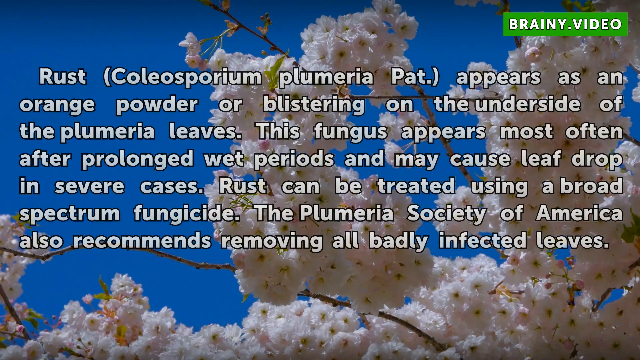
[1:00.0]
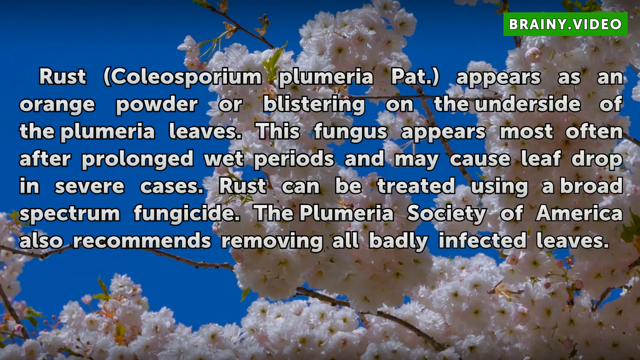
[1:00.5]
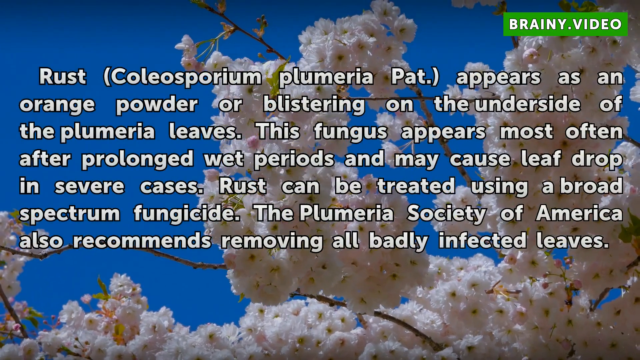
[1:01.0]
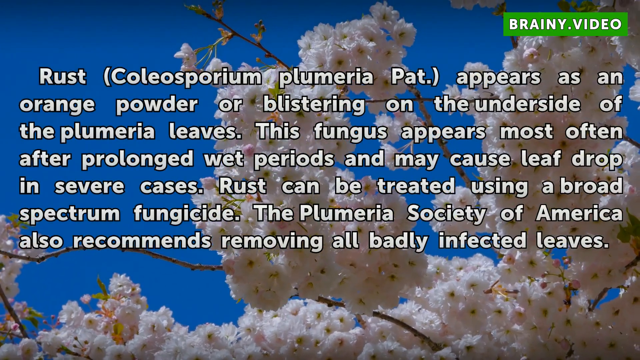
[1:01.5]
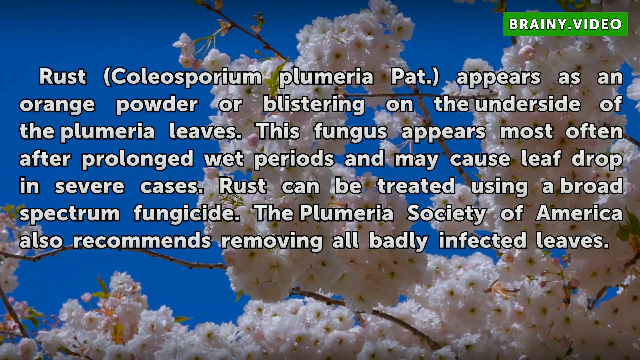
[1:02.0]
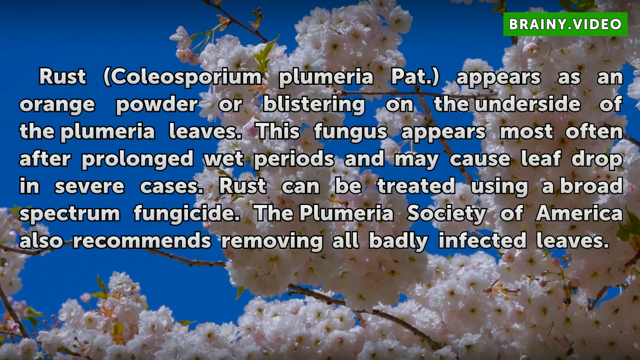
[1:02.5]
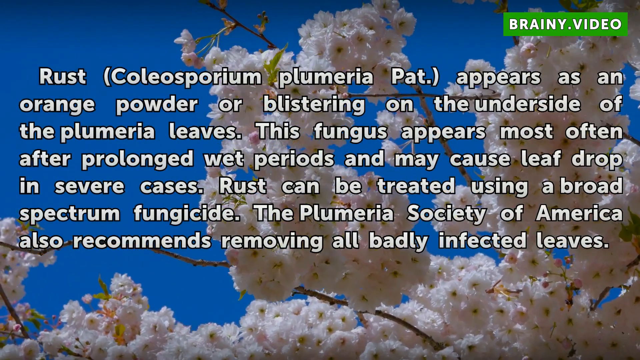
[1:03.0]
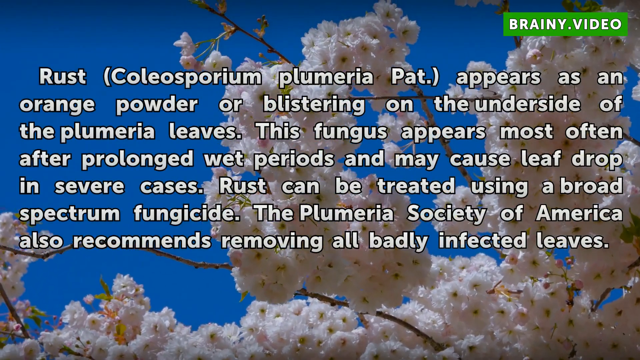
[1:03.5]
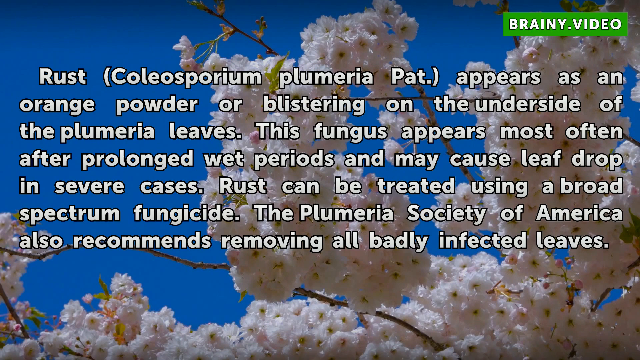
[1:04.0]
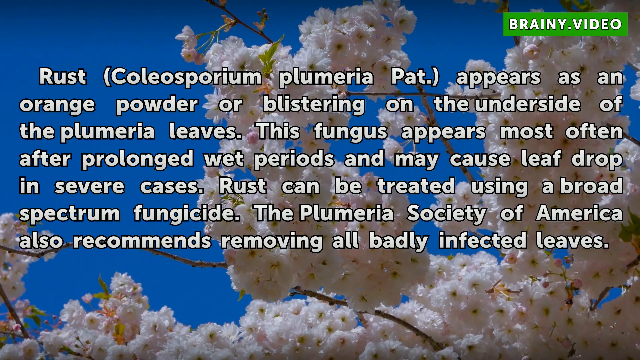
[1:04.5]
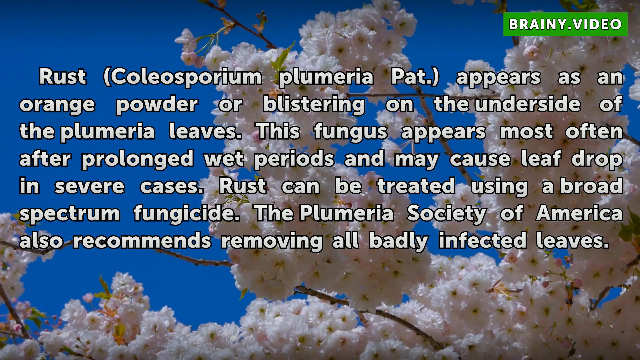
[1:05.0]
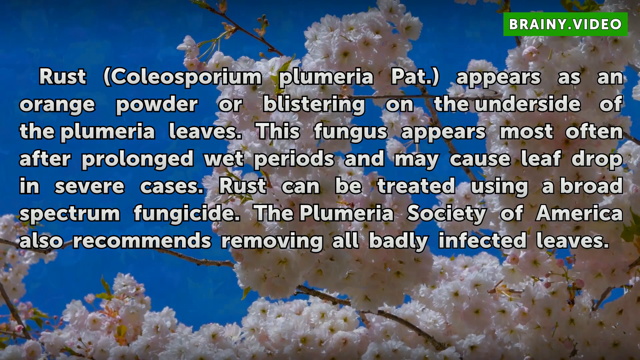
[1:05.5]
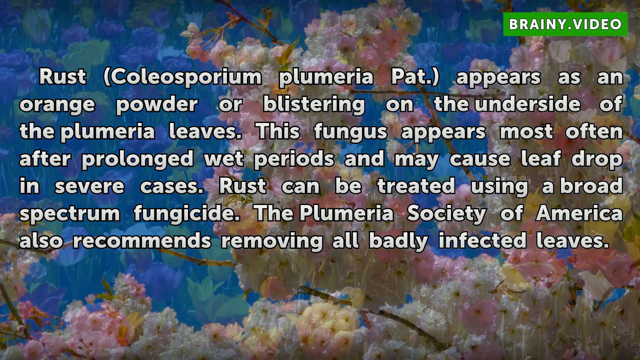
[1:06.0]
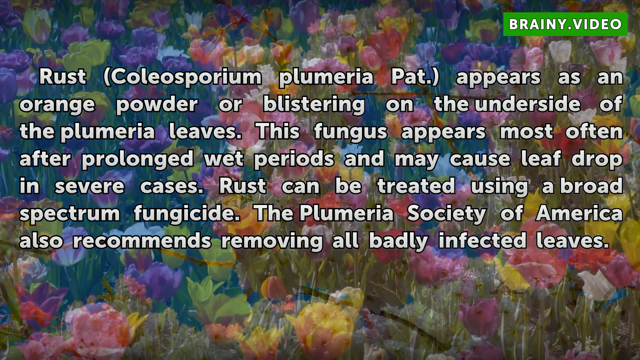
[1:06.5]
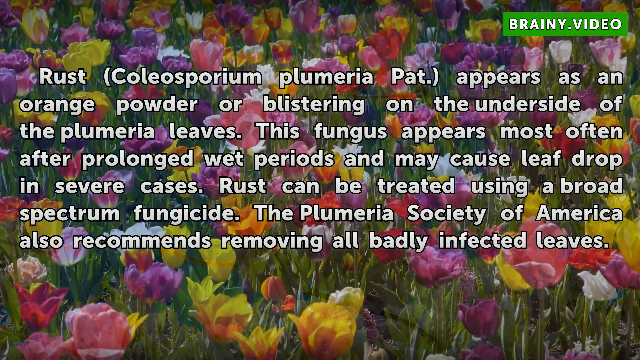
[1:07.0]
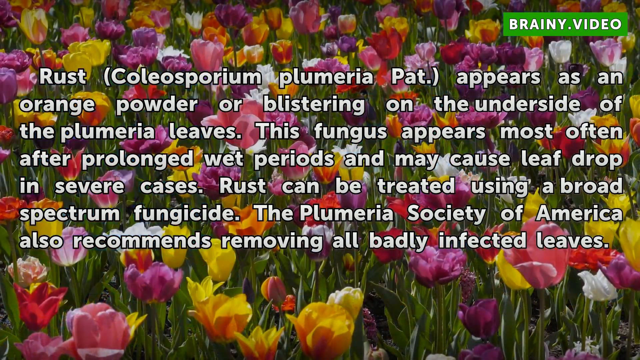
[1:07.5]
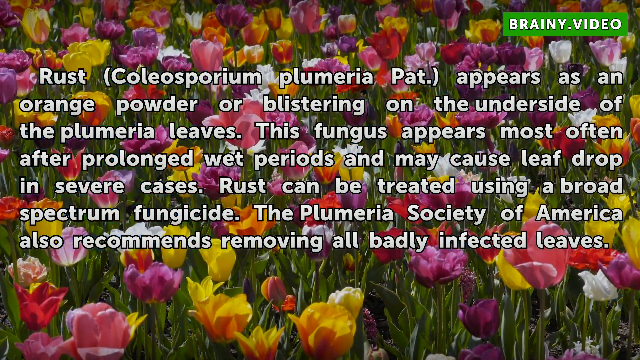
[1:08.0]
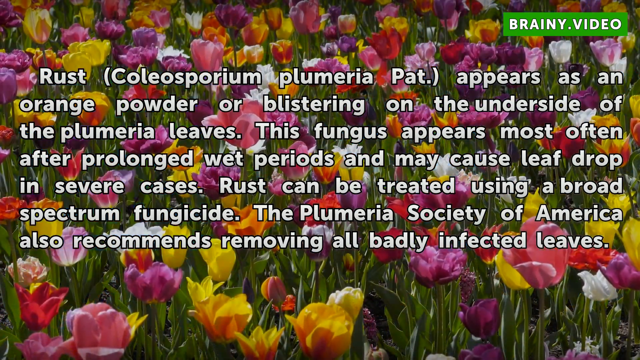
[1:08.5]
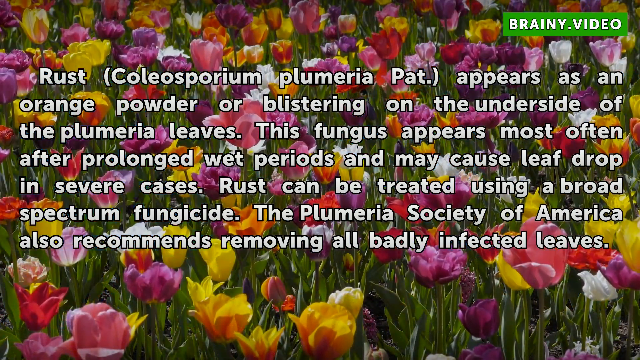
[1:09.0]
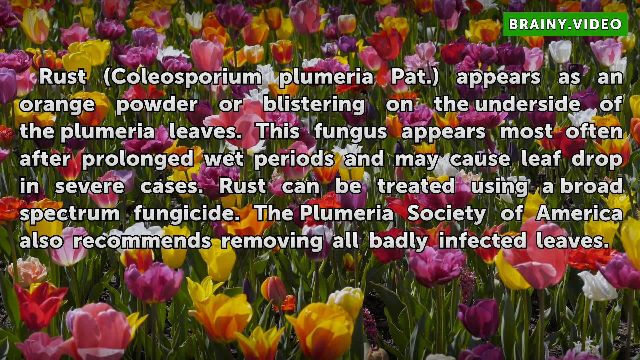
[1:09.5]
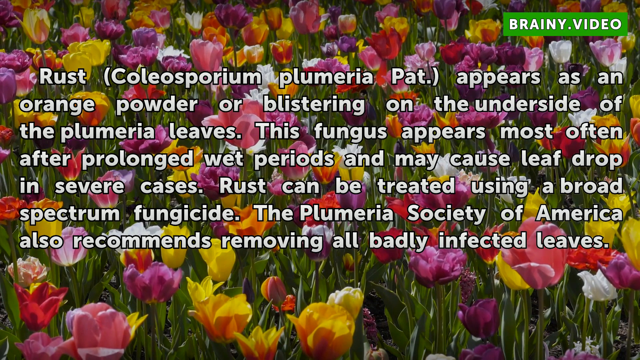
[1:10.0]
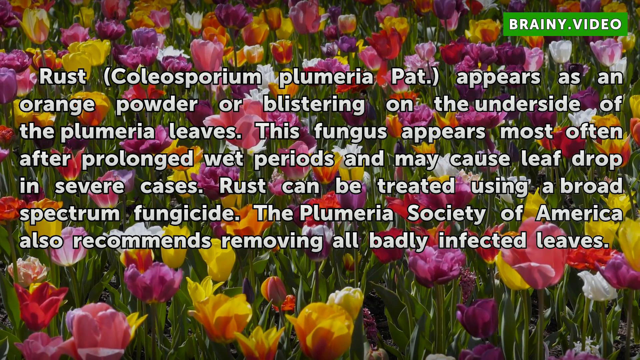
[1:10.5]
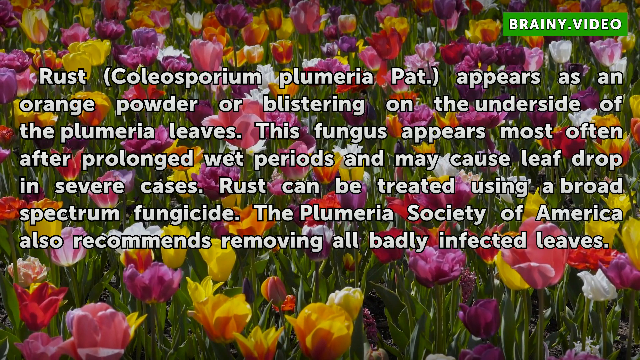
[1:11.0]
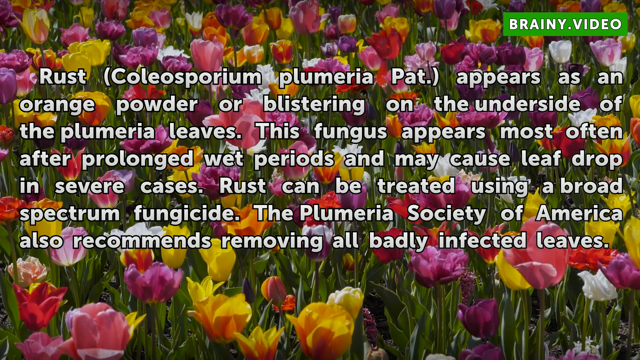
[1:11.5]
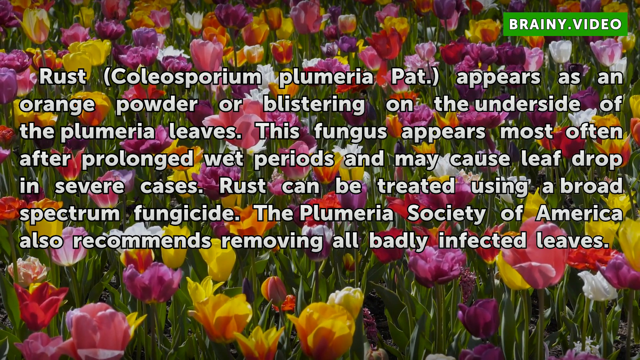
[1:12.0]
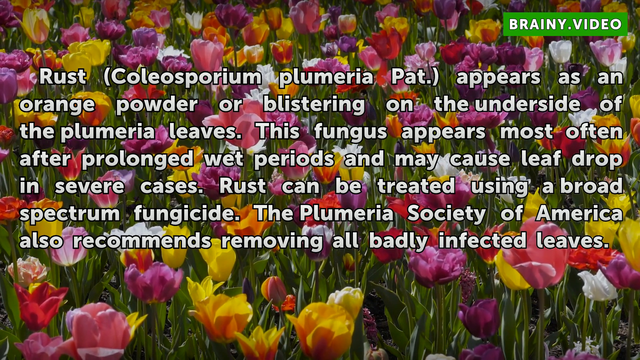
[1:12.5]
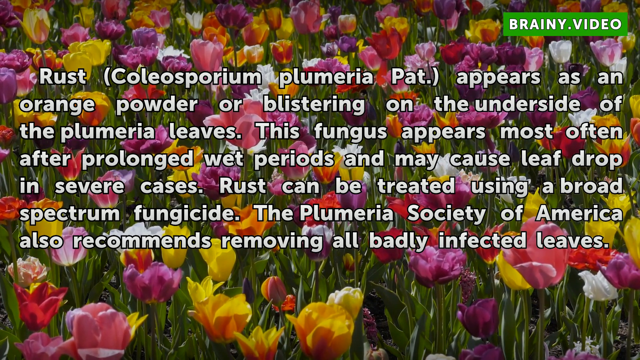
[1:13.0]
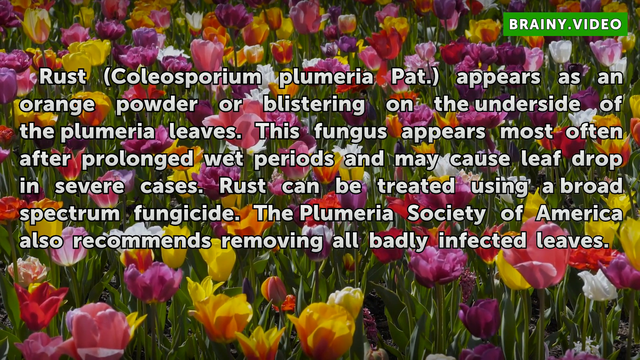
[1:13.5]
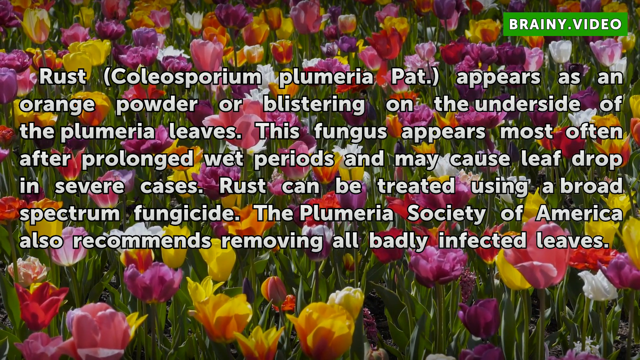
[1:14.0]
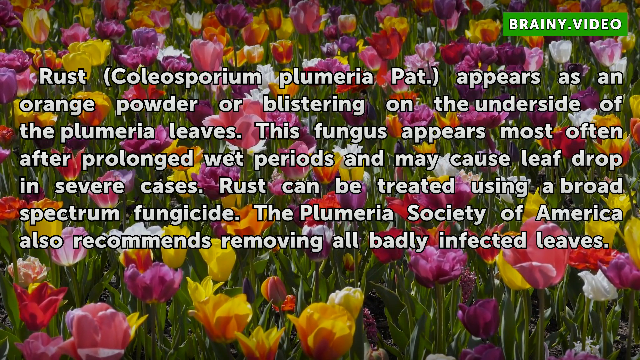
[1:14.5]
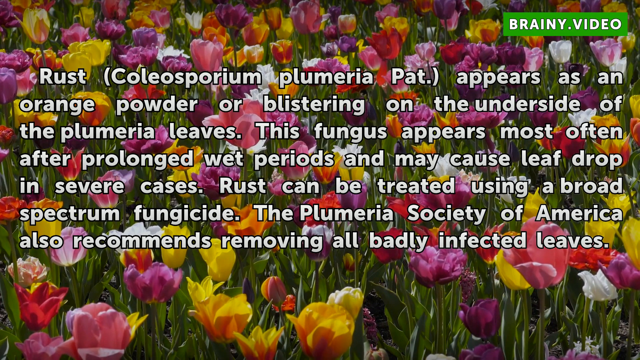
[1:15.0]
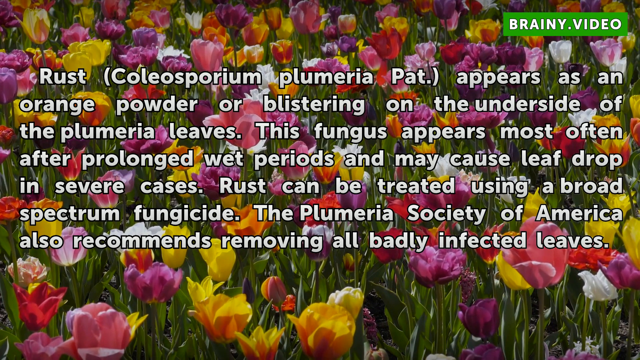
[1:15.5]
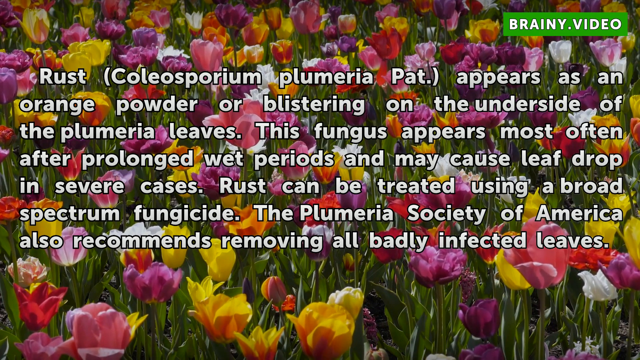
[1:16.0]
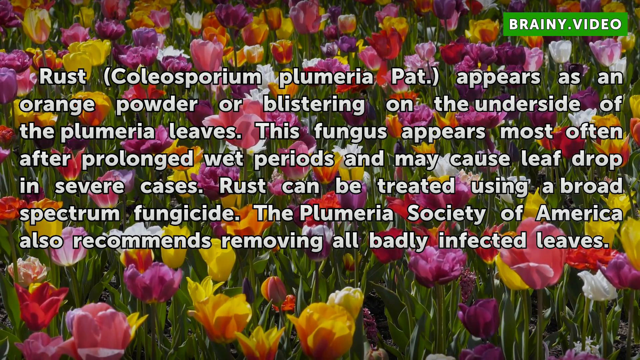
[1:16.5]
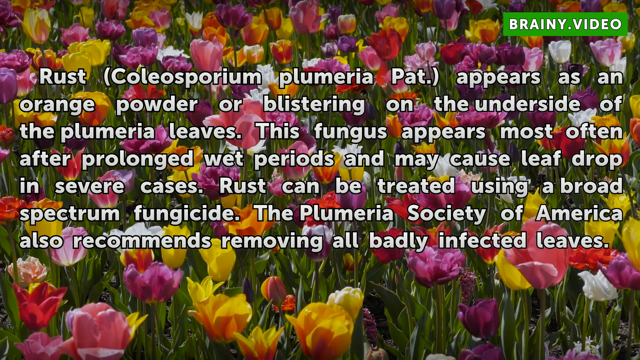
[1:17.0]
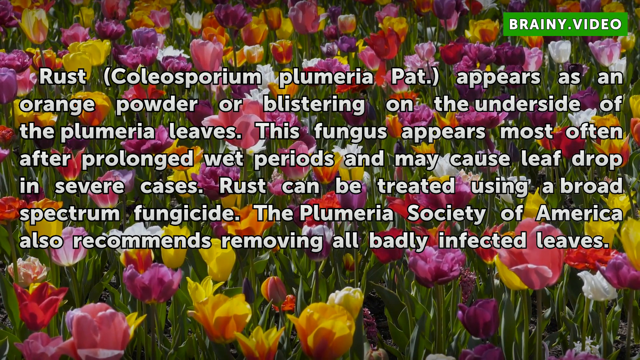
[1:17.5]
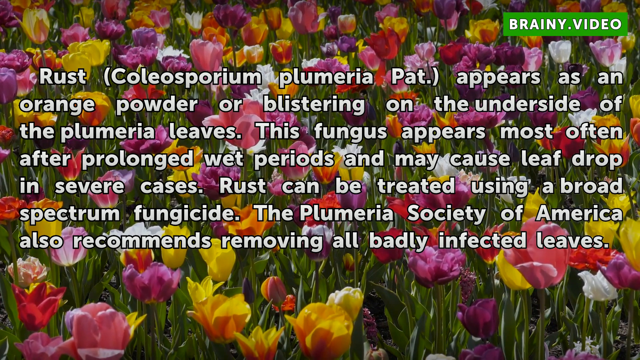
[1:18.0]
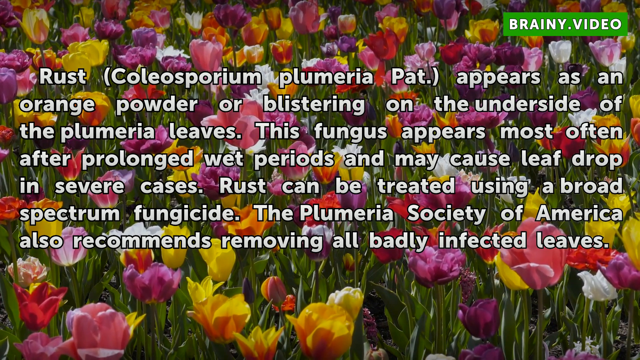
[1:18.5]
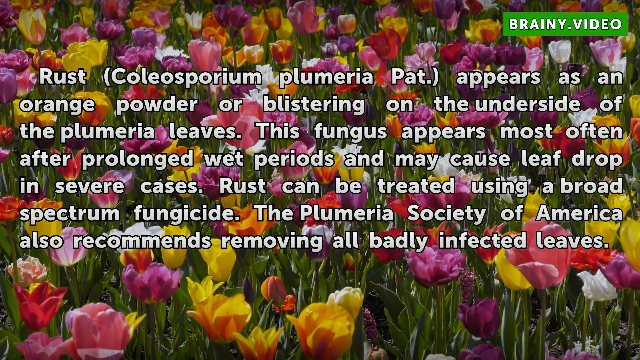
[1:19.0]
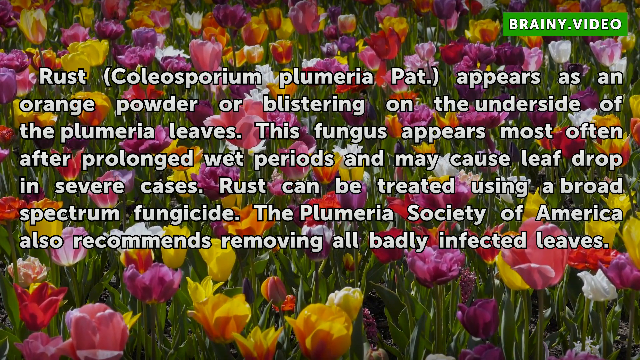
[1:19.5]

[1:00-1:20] The video covers rust, which appears as an orange powder or blistering on the underside of plumeria leaves. This fungus appears most often after prolonged wet periods and may cause leaf drop in severe cases. Rust can be treated using a broad spectrum fungicide, and the Plumeria Society of America also recommends removing all badly infected leaves.